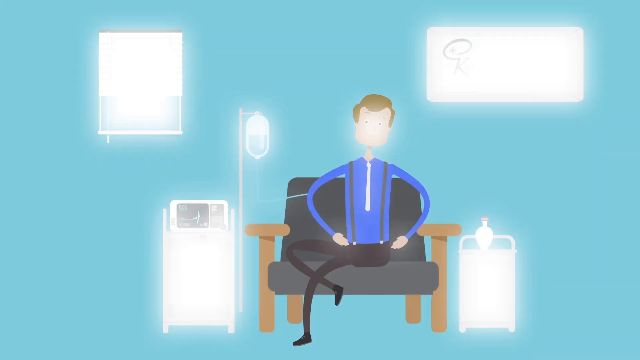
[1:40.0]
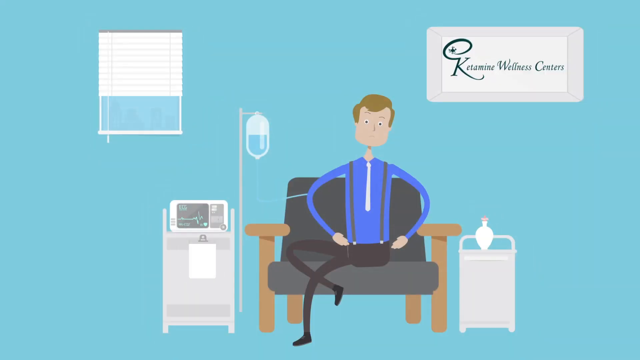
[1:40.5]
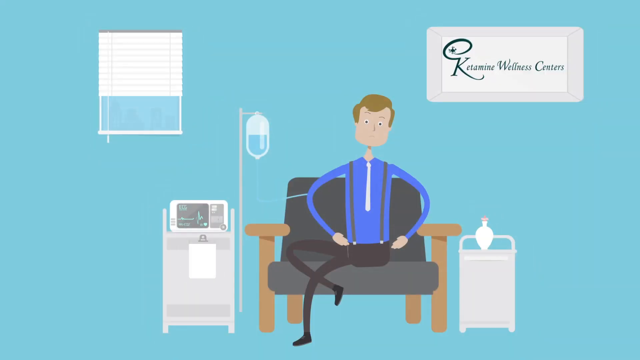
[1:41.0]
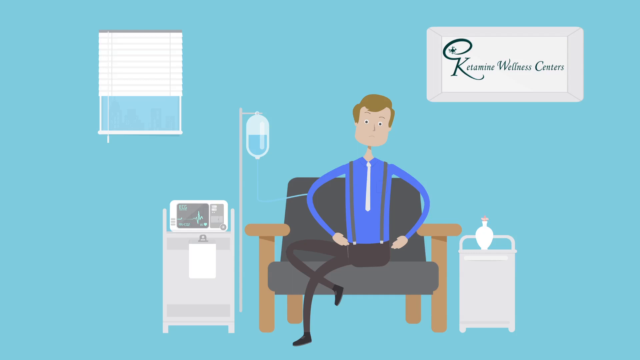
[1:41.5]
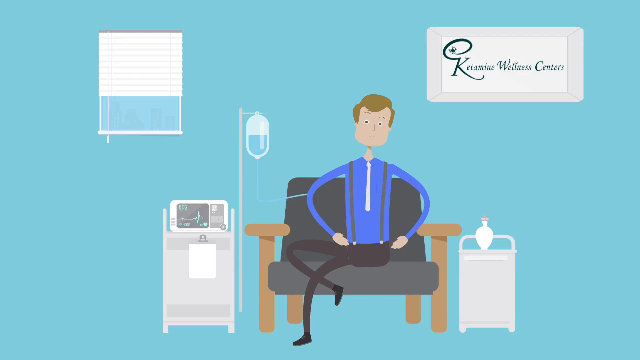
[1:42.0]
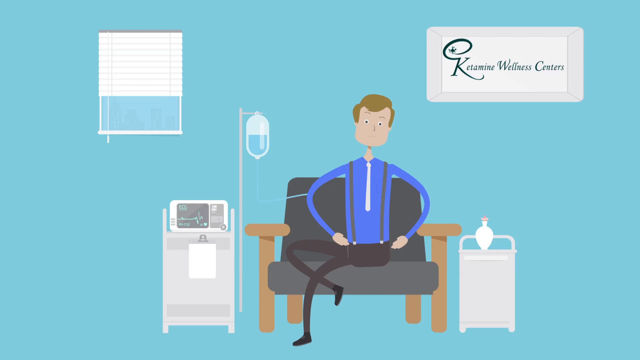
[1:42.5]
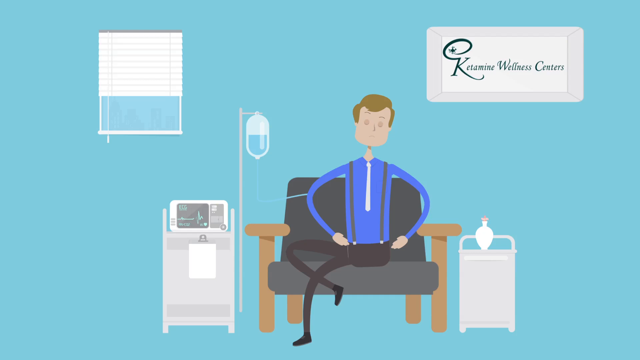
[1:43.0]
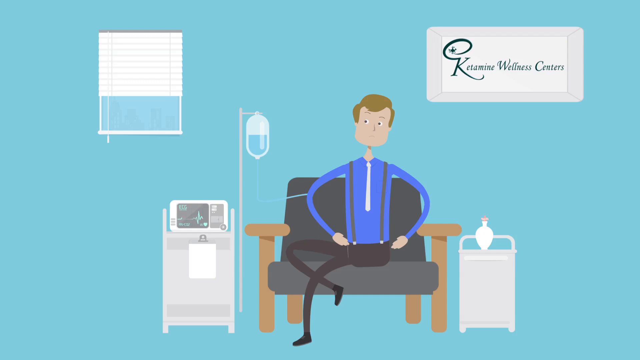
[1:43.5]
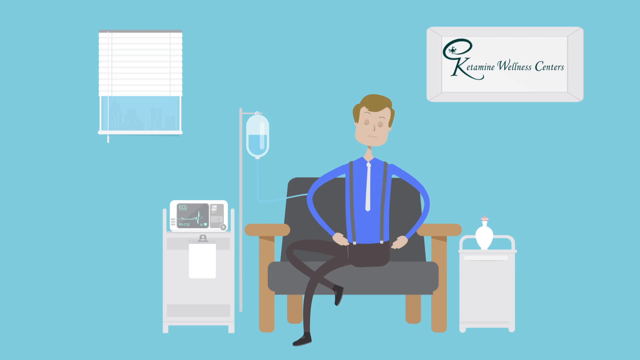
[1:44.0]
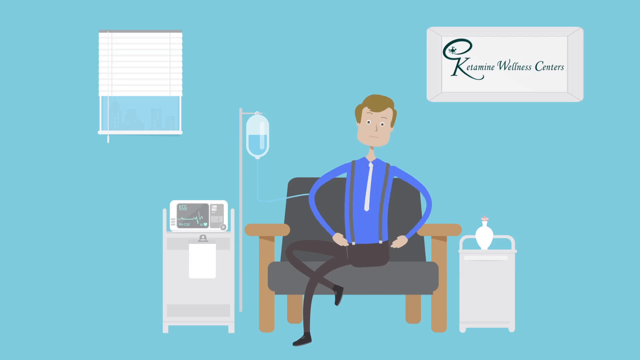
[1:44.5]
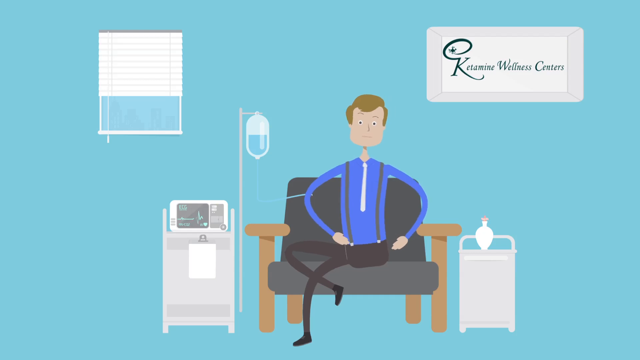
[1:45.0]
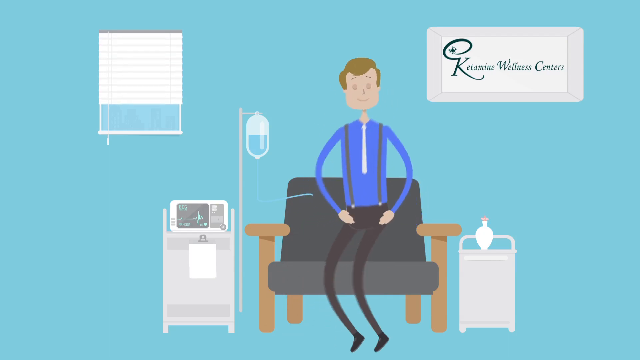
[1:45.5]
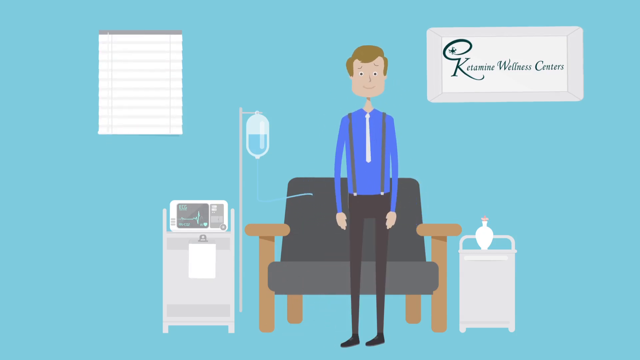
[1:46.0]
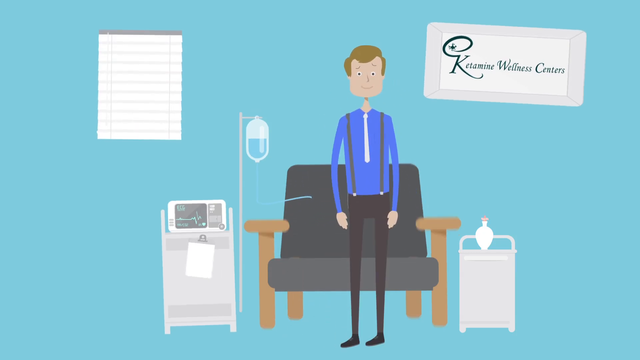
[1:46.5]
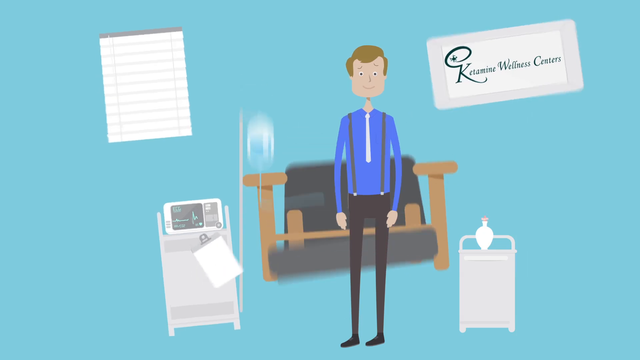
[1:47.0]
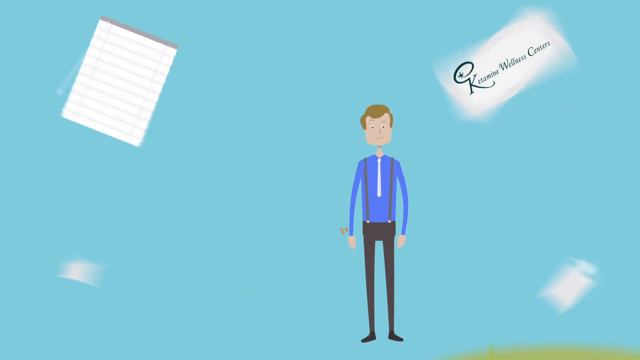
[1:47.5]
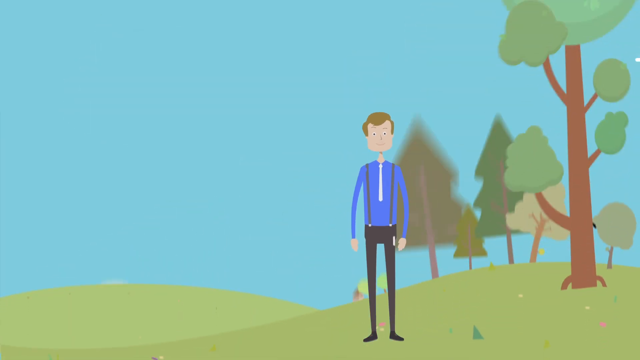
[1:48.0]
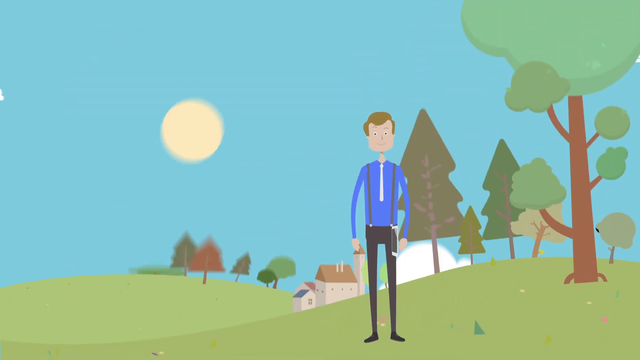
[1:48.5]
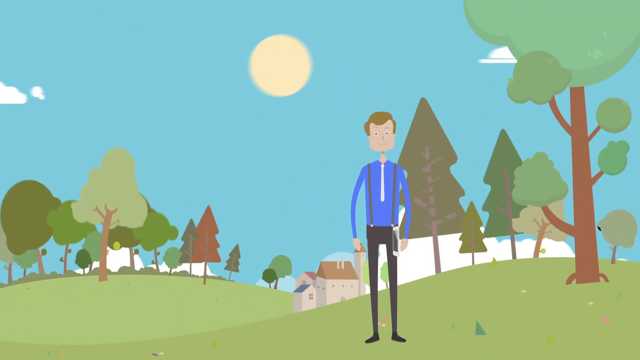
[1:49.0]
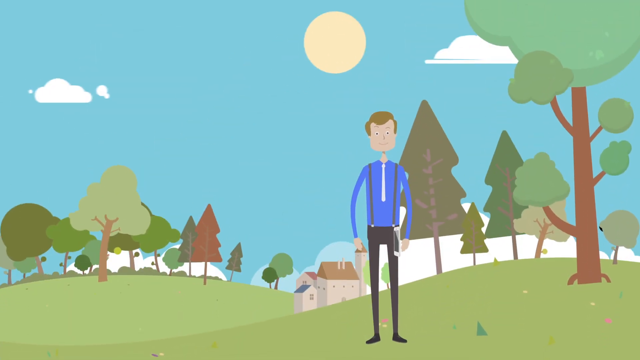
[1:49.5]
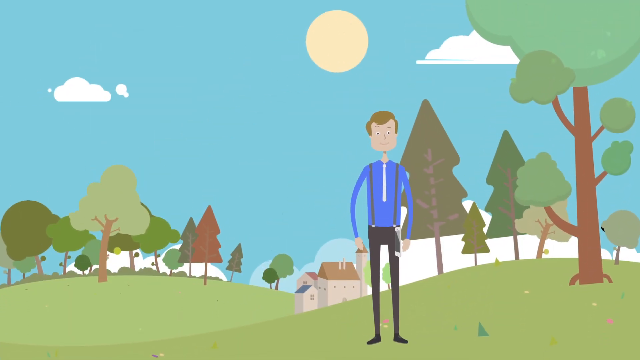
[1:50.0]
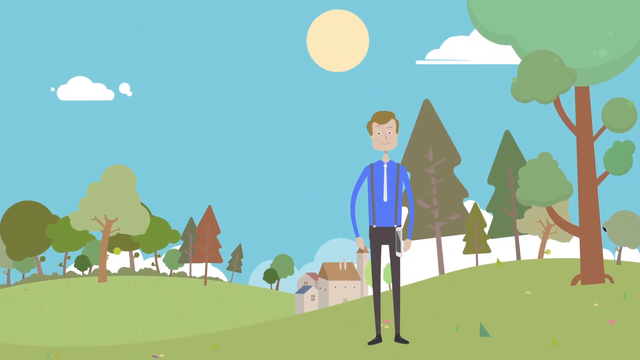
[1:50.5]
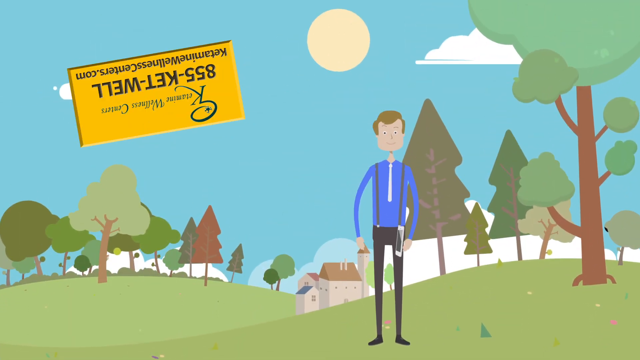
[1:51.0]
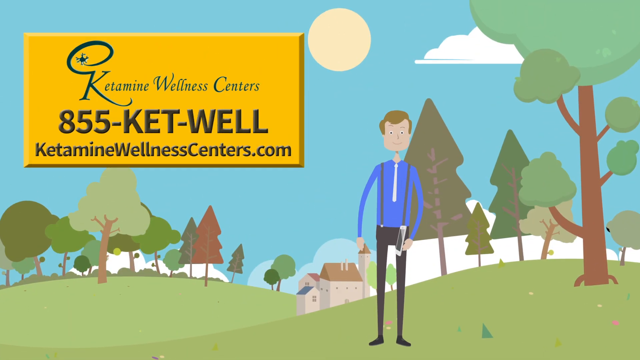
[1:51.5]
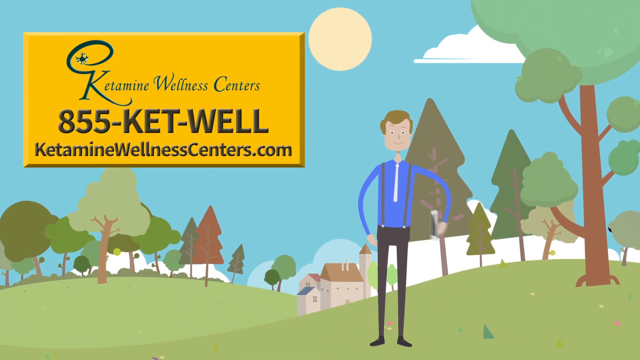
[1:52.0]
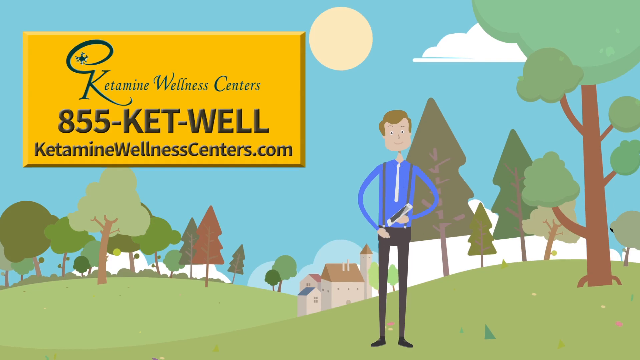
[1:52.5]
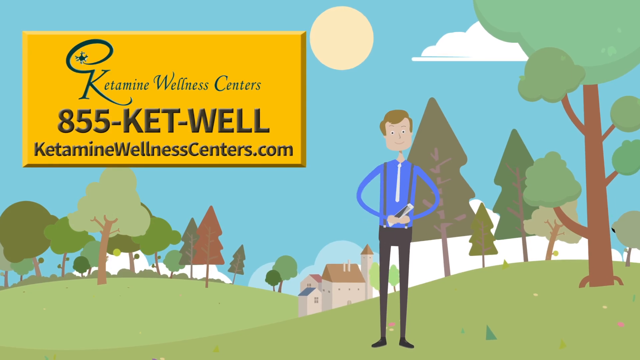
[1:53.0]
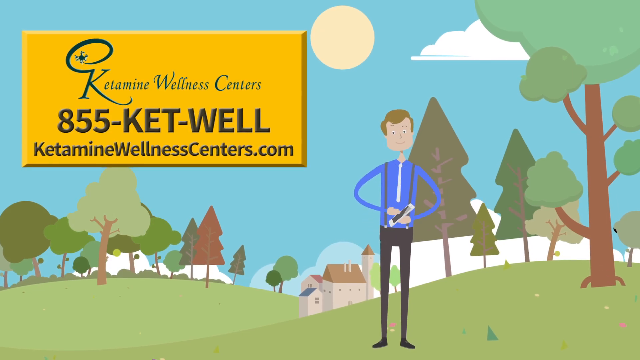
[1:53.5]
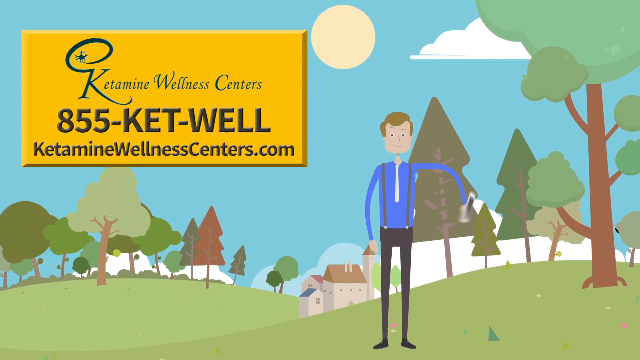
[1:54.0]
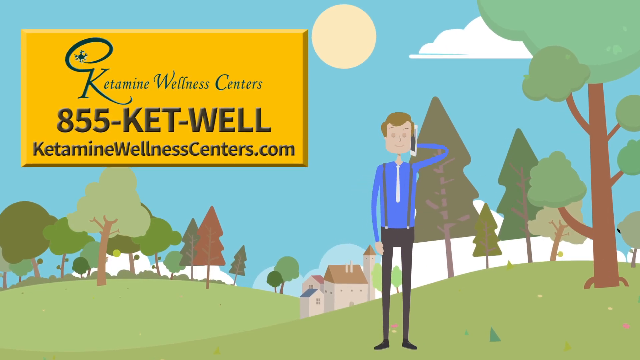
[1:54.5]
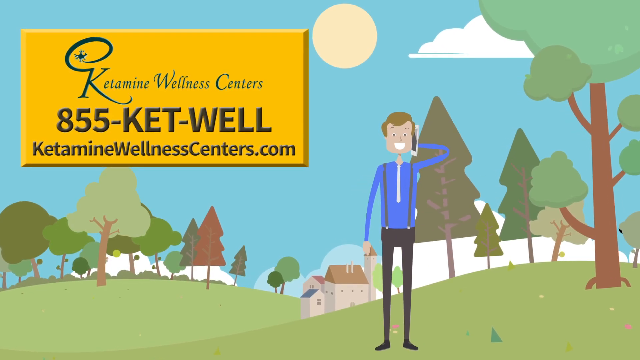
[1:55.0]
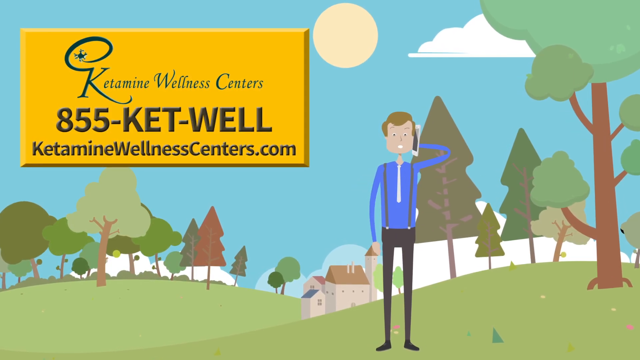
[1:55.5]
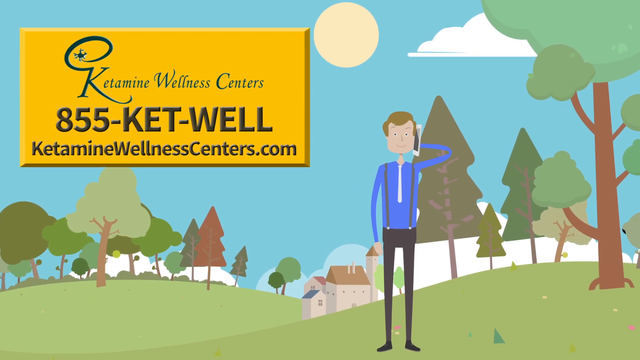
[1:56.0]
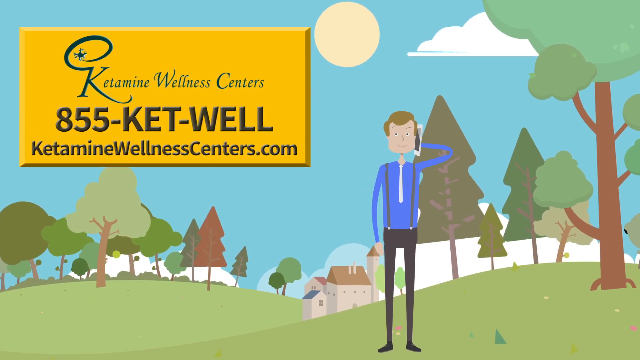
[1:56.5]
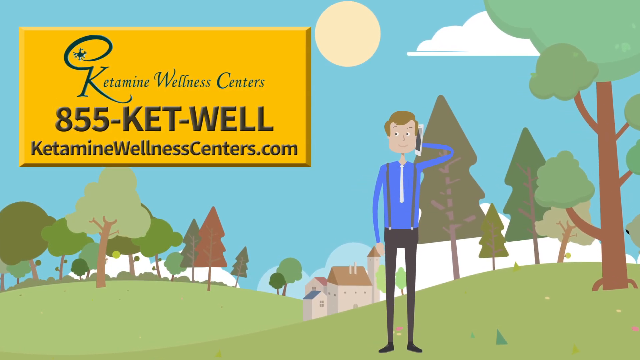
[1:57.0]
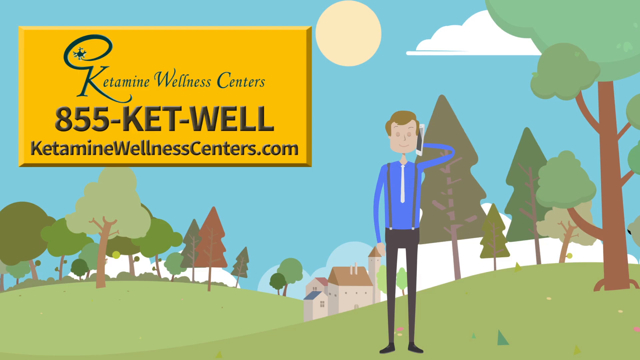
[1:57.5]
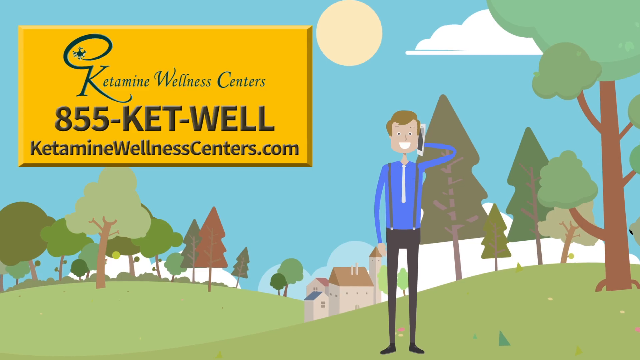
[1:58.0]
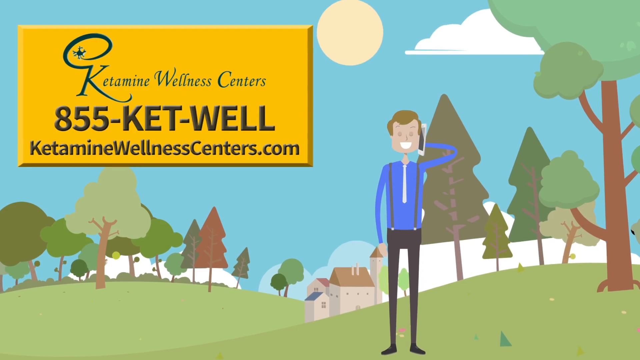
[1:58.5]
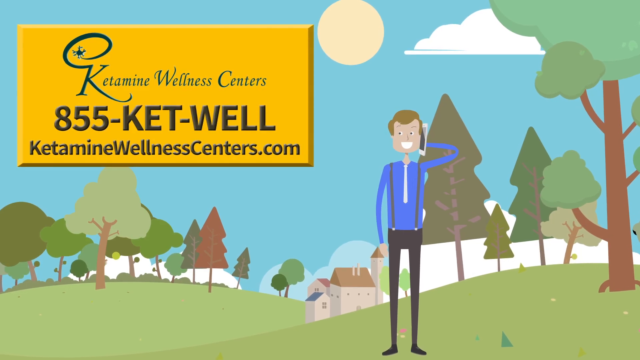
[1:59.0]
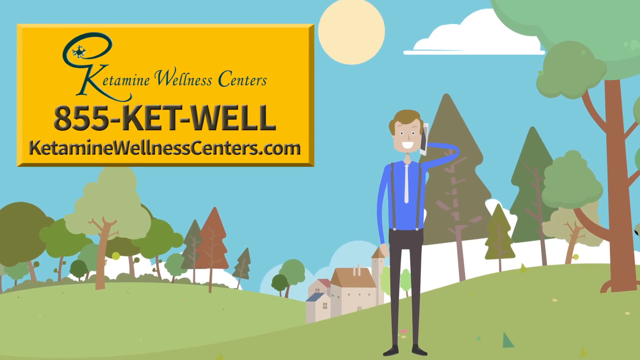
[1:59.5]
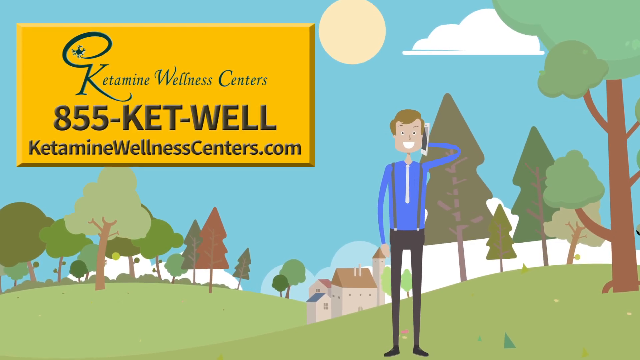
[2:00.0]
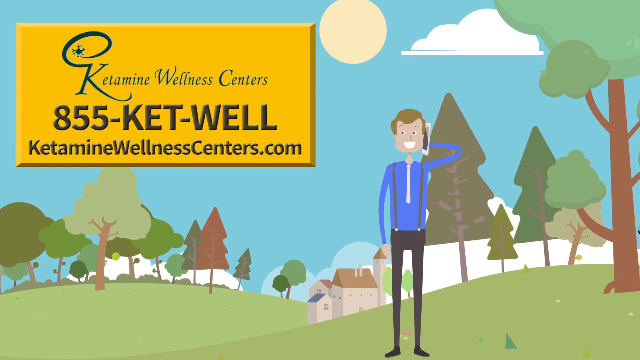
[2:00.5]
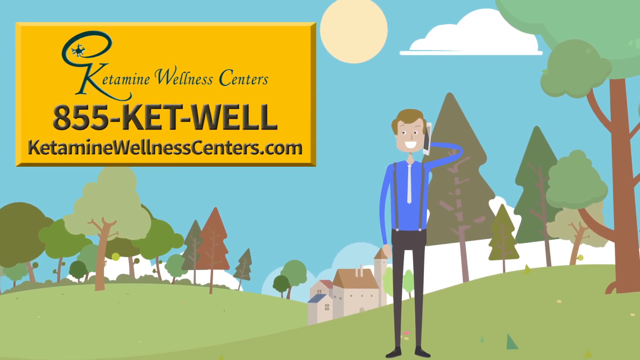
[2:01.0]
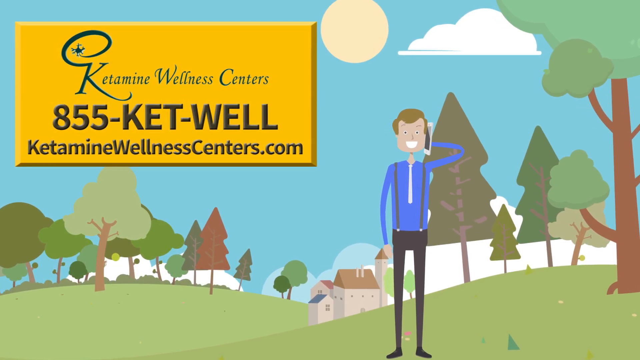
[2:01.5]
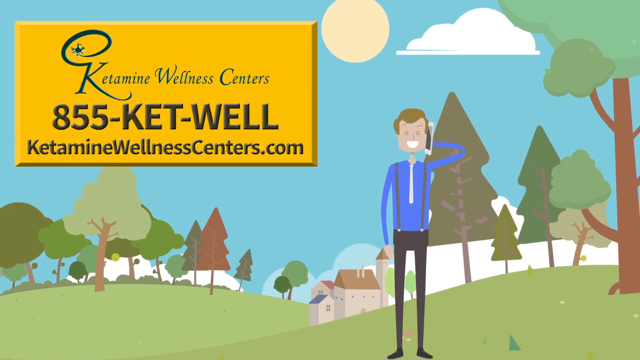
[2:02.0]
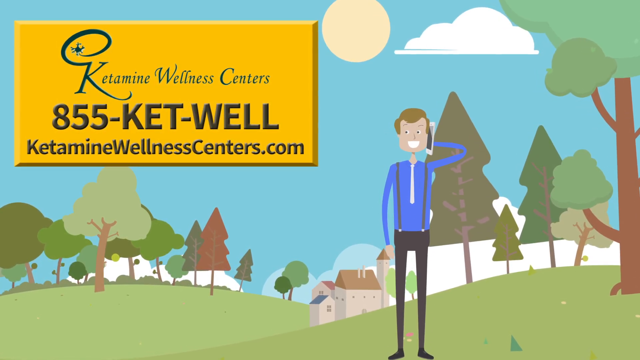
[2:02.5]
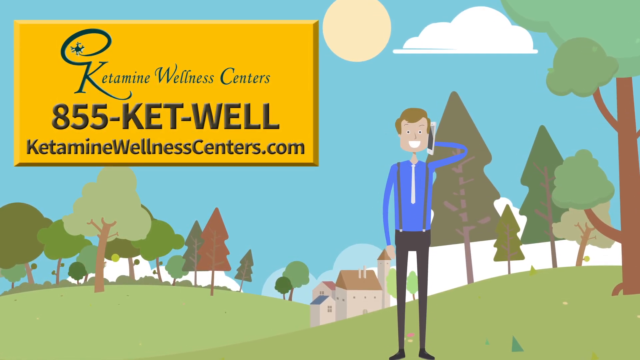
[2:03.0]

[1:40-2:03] The patient appears in another type of medical room; the wall seems to say "Ketamine Wellness Centers". There is a small window with a blind in the top left, a monitor with an IV, and a chair the patient is sitting on. He seems to be connected to the IV placed next to the chair. He abruptly stands up as the blind closes and the IV disconnects, and the furniture disappears as he moves to an outdoor scene. He stands outside while the sun comes up and clouds come out, with trees lining the hills. A big sign with a yellow block and wording that reads "Ketamine Wellness Centers 855-KET-KetamineWellnessCenters.com" appears in the top left corner, taking up about half the screen, and he pulls out his phone to talk as he looks around.